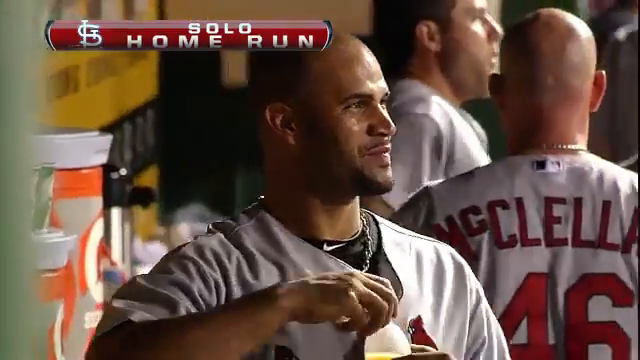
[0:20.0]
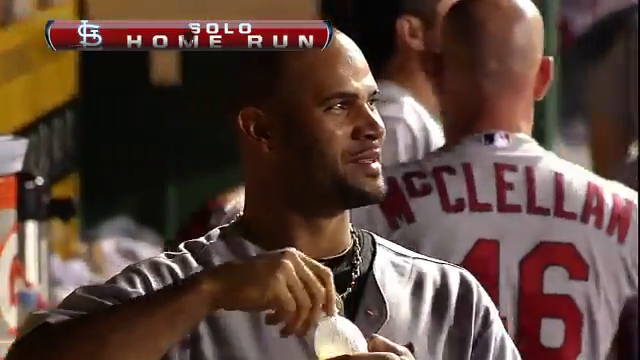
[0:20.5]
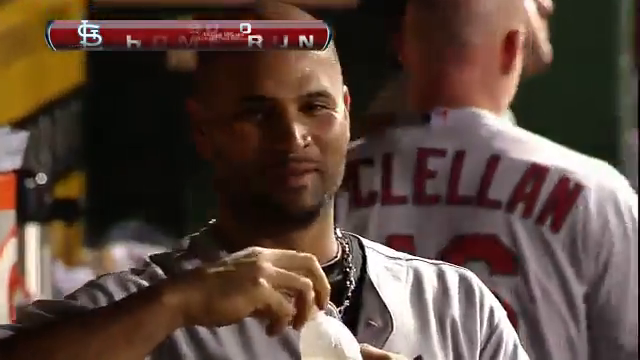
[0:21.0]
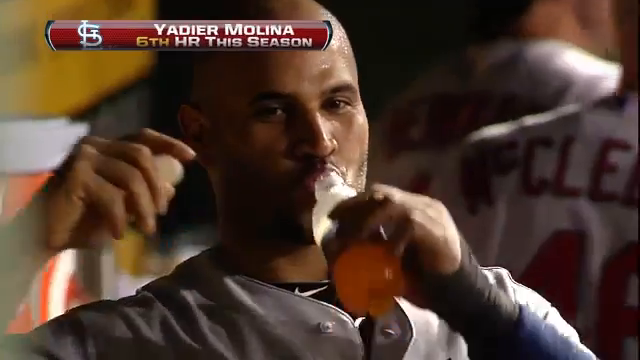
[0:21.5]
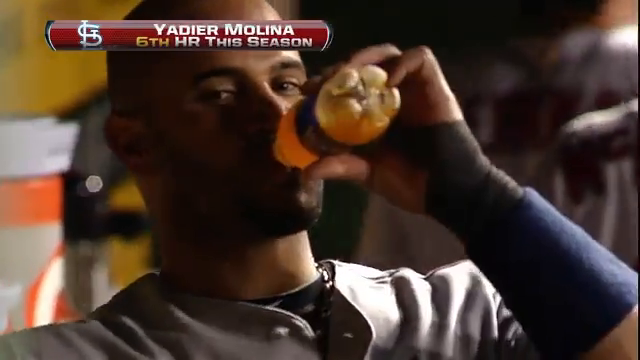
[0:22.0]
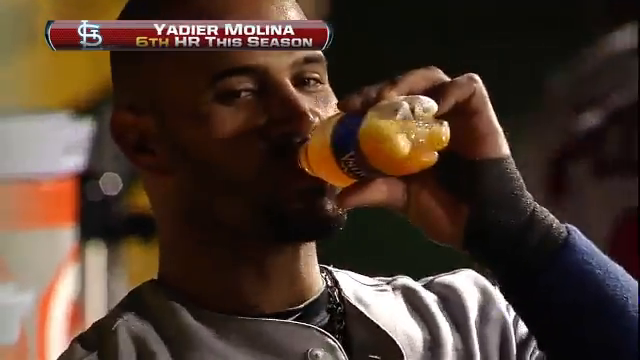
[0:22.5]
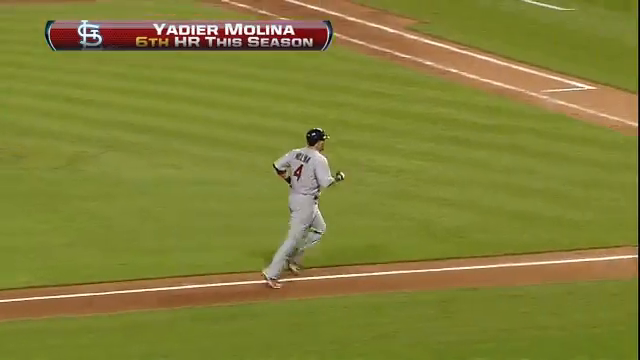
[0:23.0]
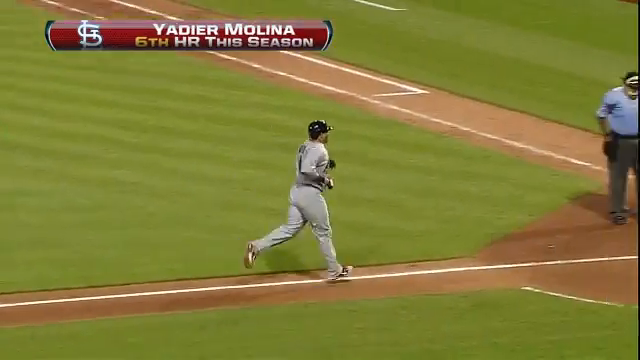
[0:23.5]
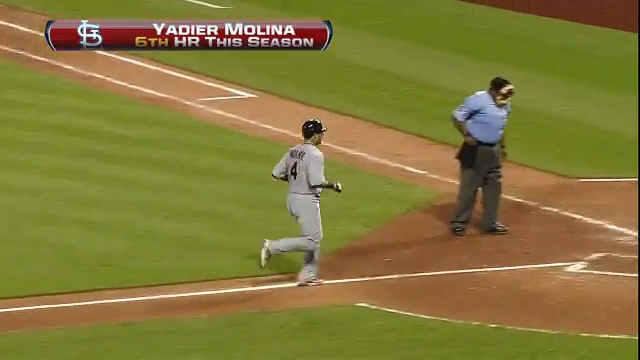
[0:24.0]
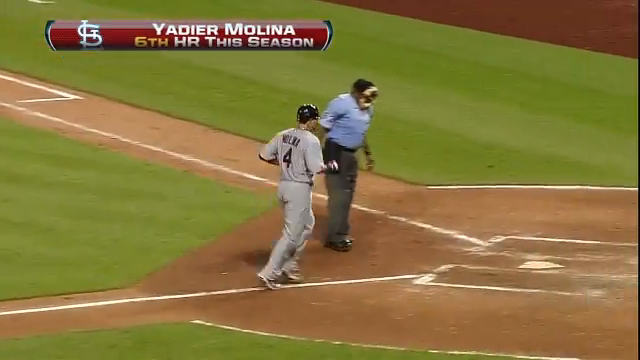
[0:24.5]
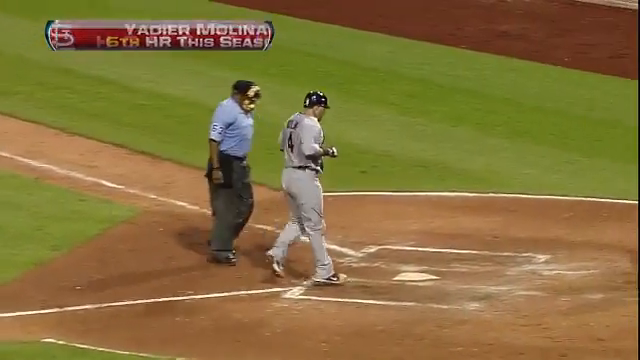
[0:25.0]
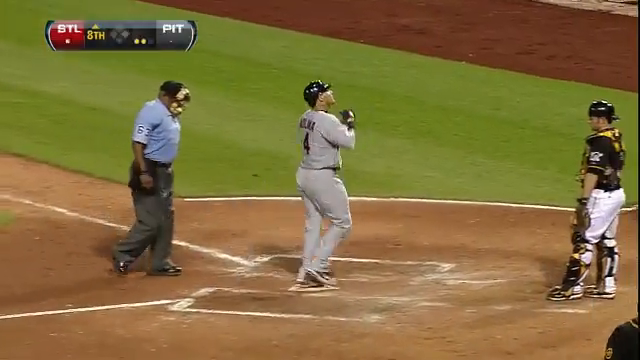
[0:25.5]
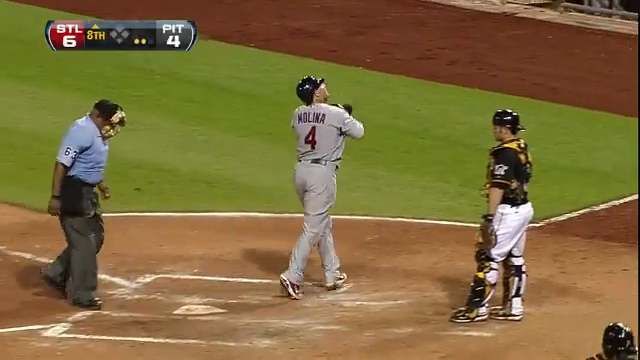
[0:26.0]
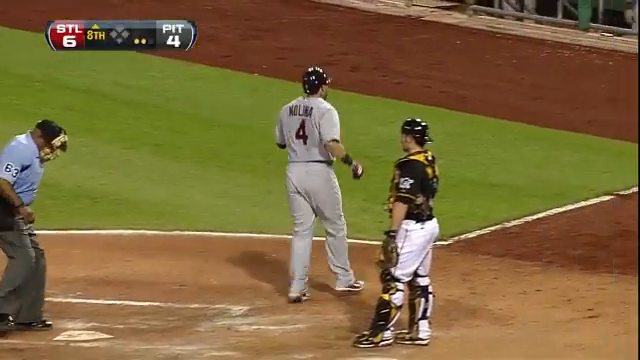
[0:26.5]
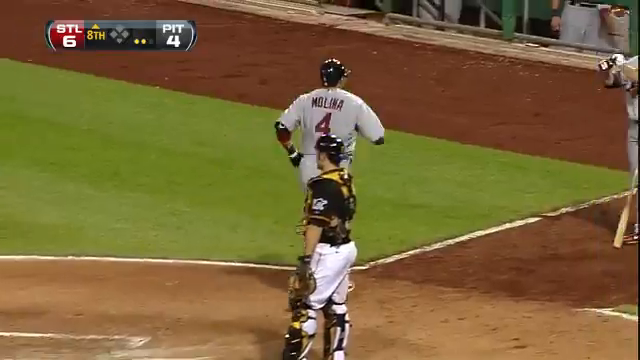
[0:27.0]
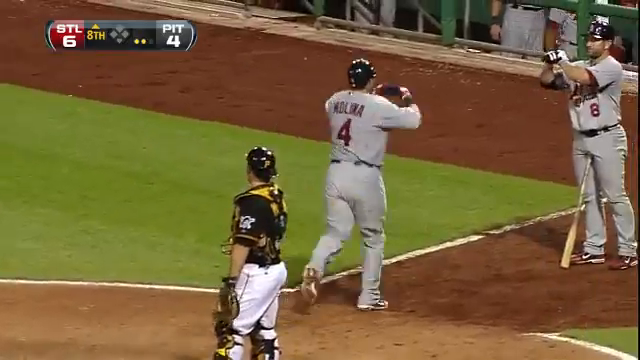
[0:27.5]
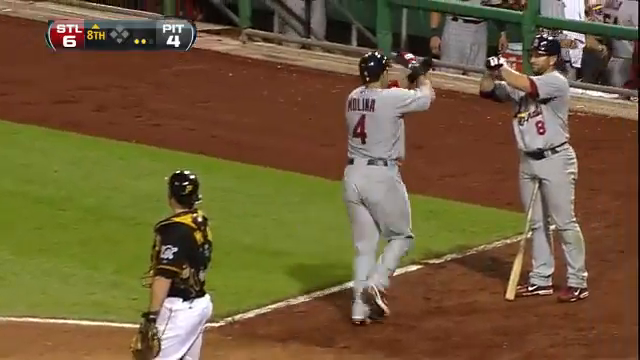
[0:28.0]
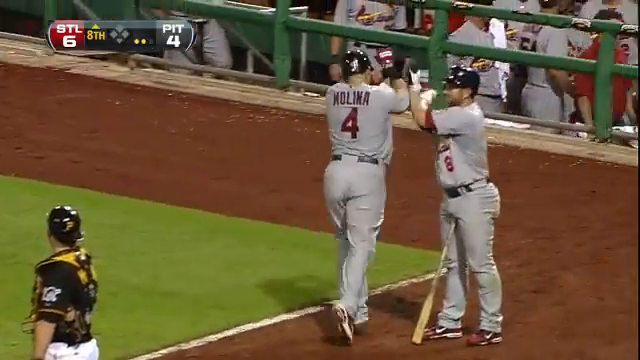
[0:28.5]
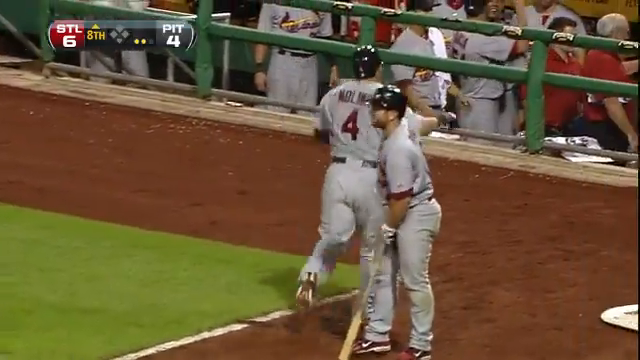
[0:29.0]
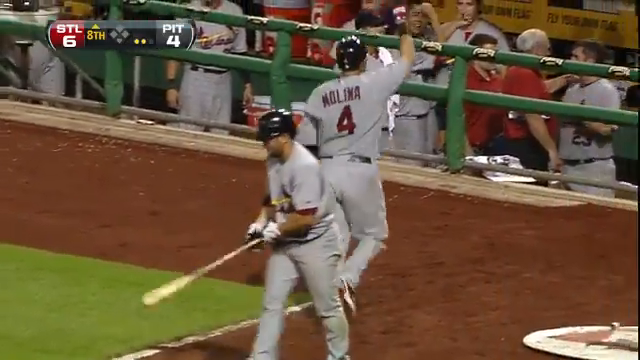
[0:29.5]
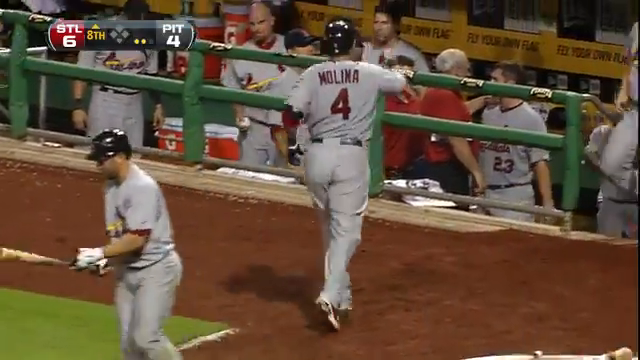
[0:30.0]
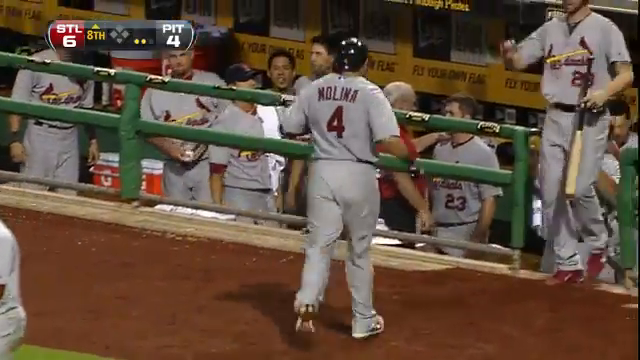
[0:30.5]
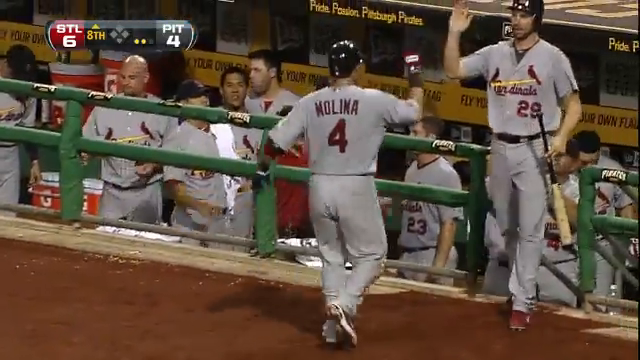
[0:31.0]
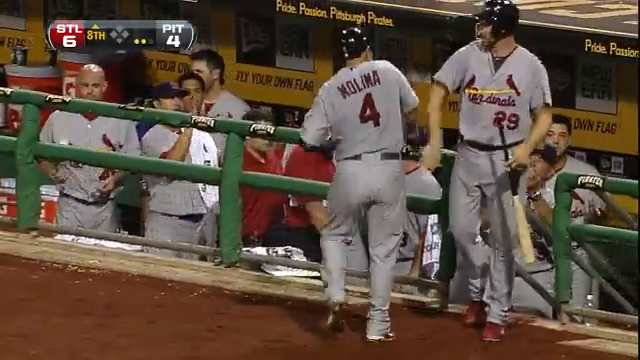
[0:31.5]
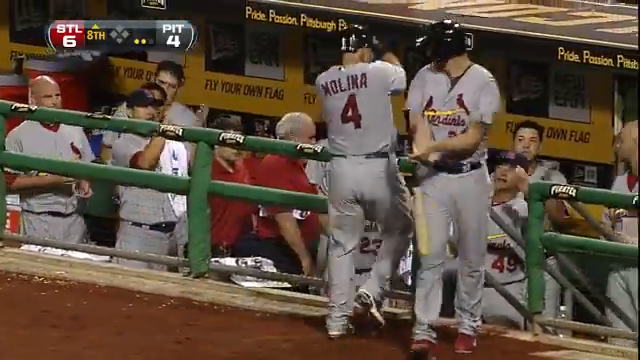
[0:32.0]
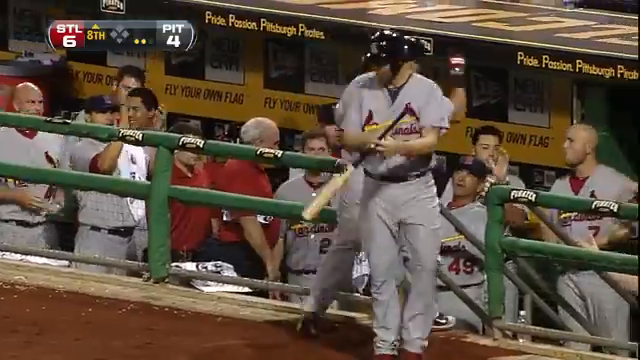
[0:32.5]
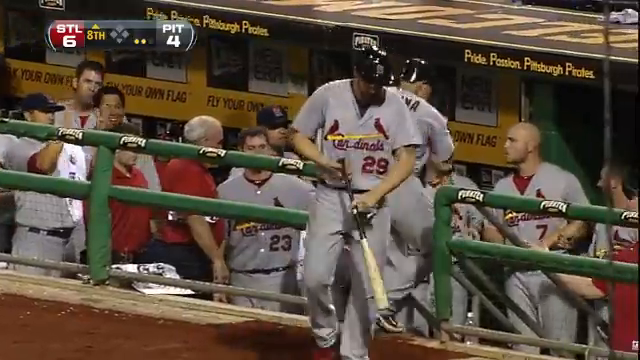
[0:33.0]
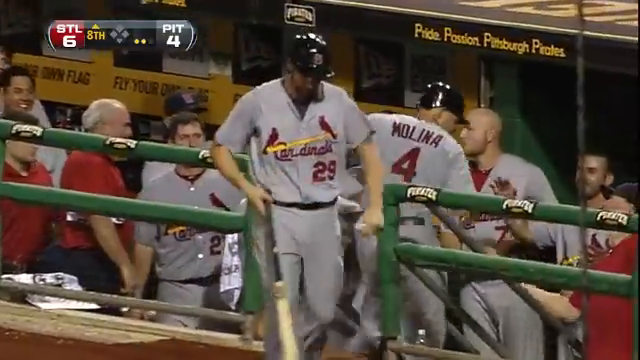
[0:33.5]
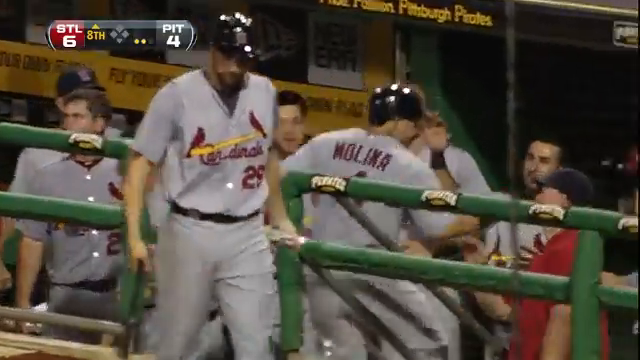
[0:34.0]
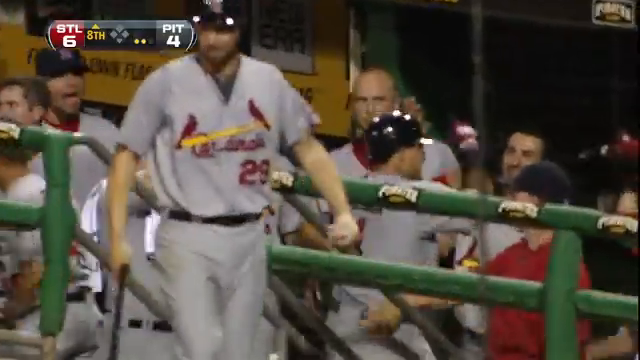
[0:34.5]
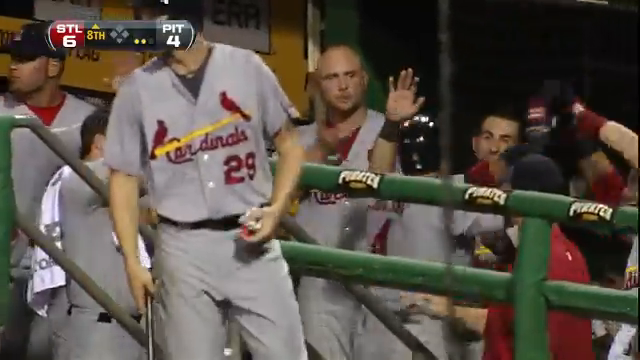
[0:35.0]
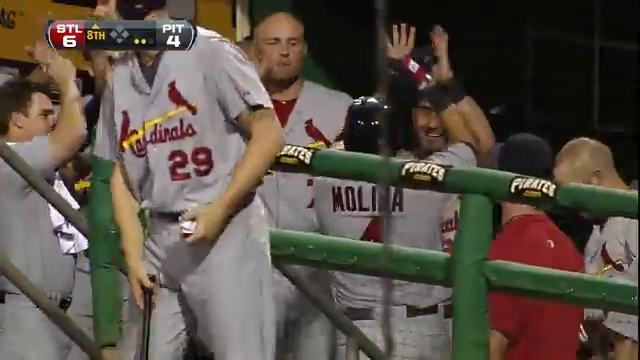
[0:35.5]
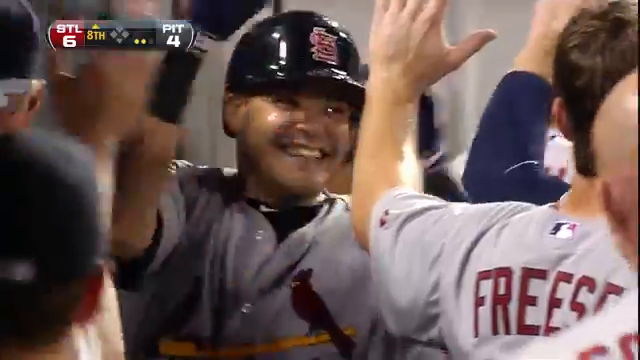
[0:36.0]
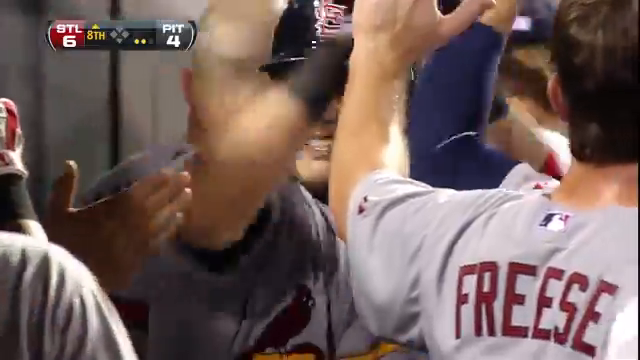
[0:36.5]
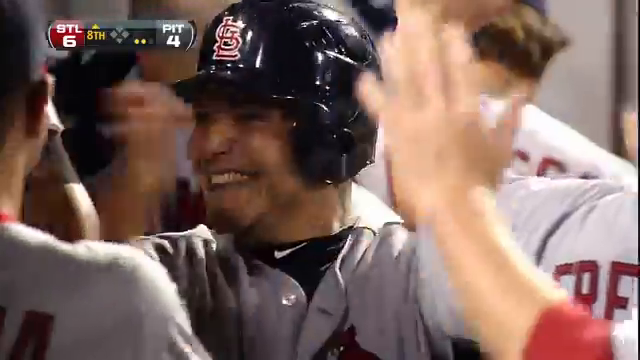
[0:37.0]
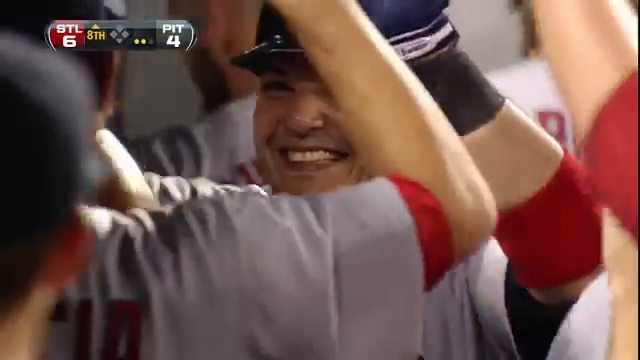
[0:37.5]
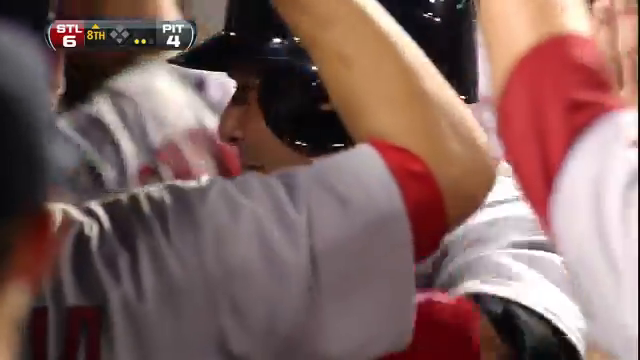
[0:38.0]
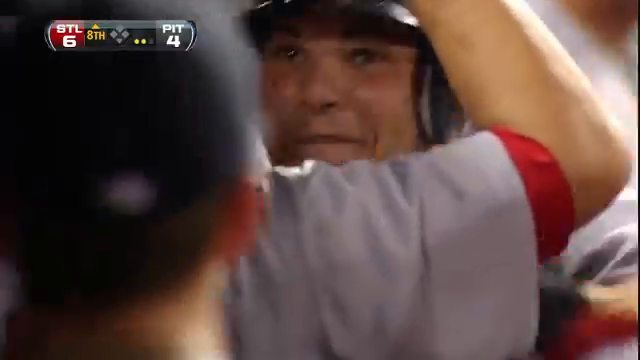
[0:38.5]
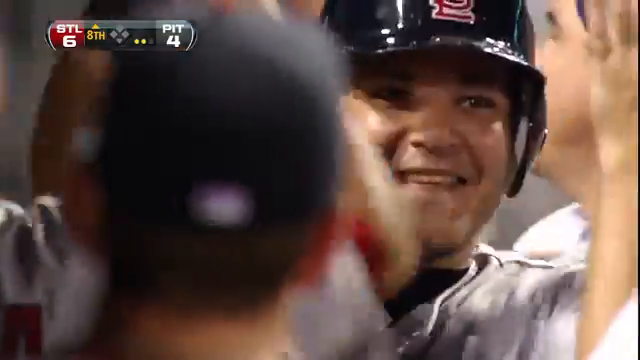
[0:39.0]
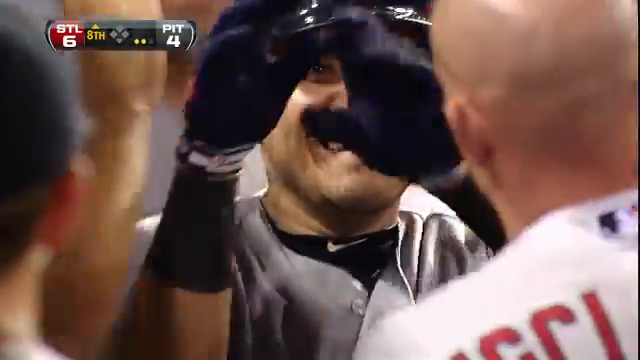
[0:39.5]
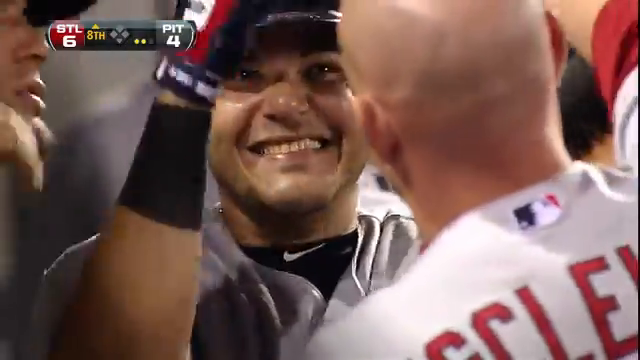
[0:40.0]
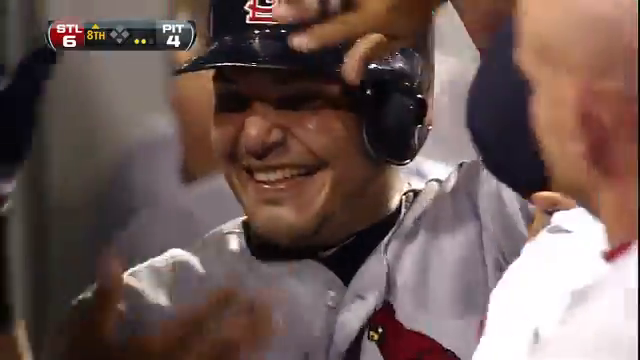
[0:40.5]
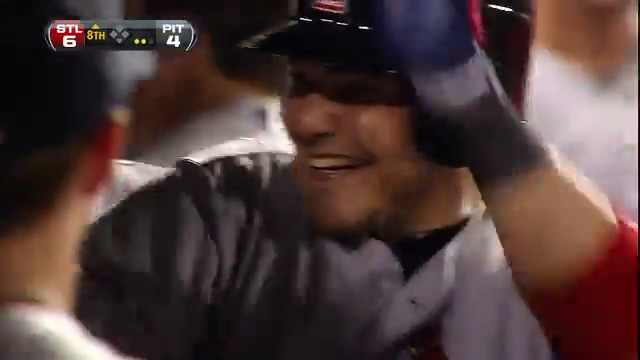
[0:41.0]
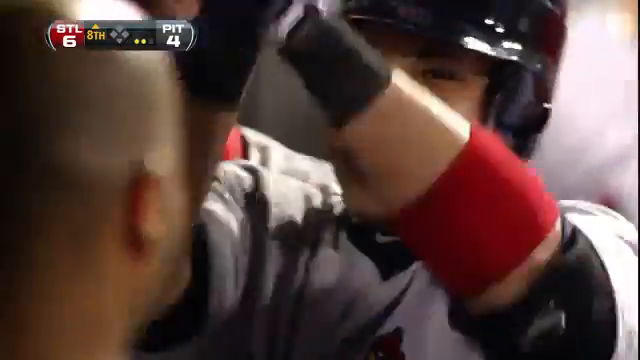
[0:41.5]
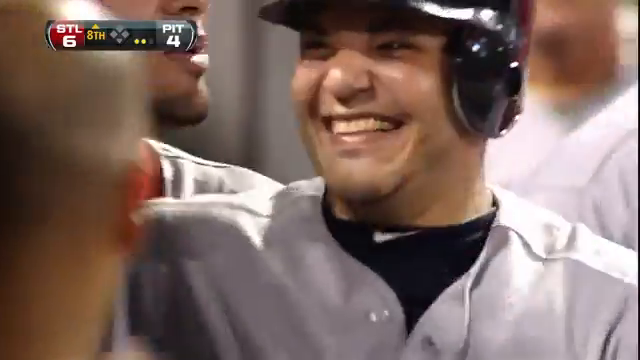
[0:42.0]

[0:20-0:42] The solo home run text fades away at the top of the screen. A close-up shows a teammate with his right hand on the top of a bottle of water; he is holding his left hand, looking out to his left and smiling. He turns to his right and takes a sip of what looks to be orange juice. The view returns to the player running toward home base, with a red text box at the top of the screen containing white text that includes "6th home run this season". He jogs to home base, briefly does a crossed-arms celebration up toward the fans, then runs over to a teammate and fist bumps him. He raises his right arm in the air as he jogs, celebrating, then runs back to his teammates, giving them a high-five and a slap on the behind. He walks down the steps among the rest of his teammates and gives many high-fives, so many that it is almost impossible to keep track. A close-up shows his face beaming and smiling; he looks absolutely delighted the whole time.